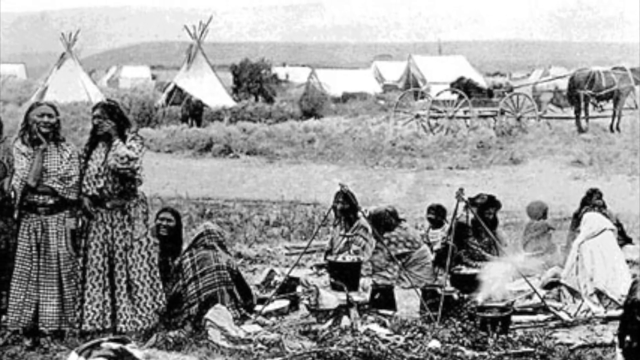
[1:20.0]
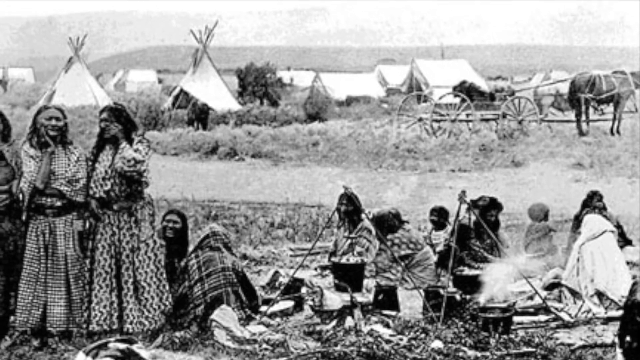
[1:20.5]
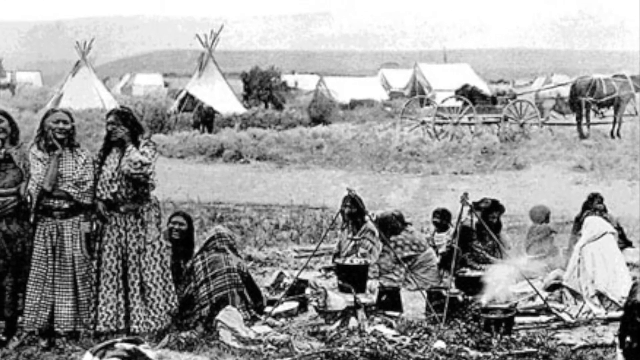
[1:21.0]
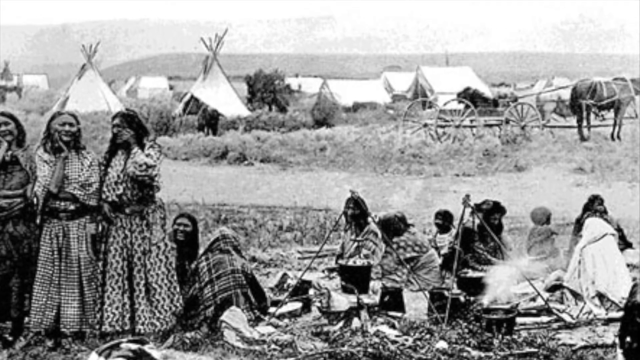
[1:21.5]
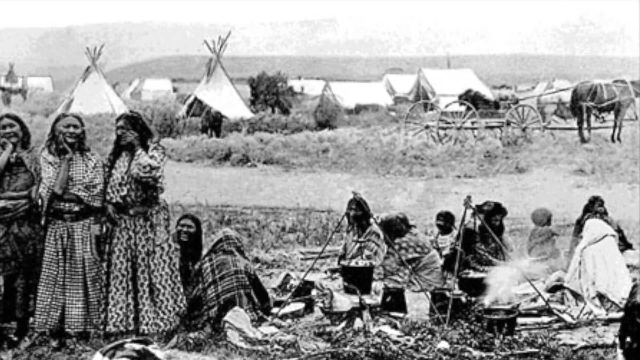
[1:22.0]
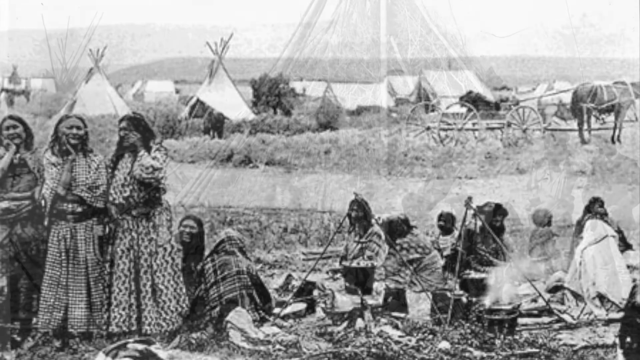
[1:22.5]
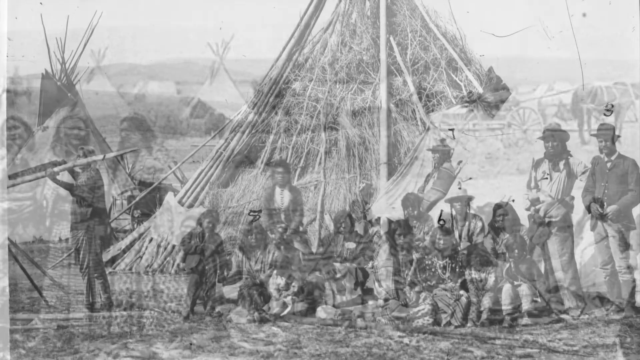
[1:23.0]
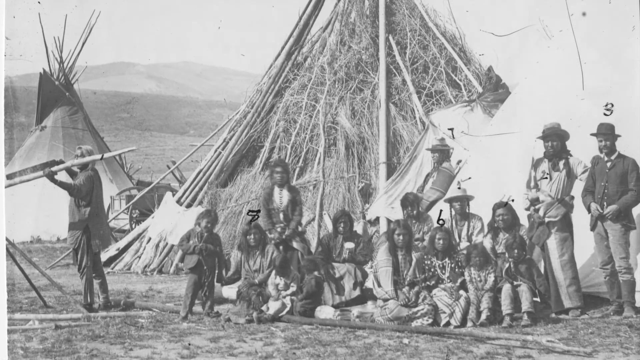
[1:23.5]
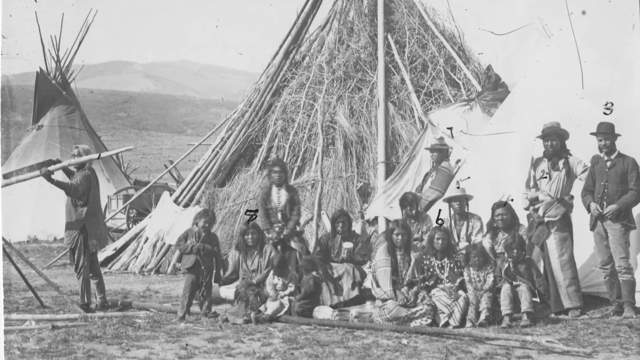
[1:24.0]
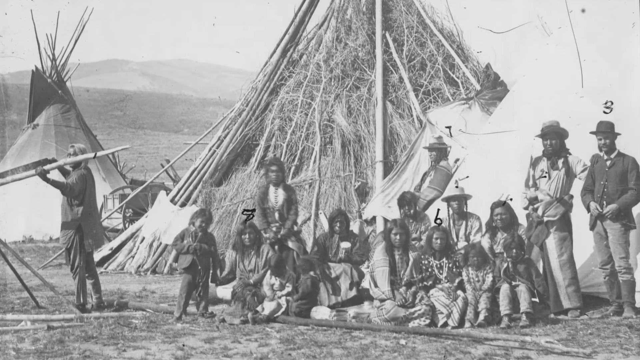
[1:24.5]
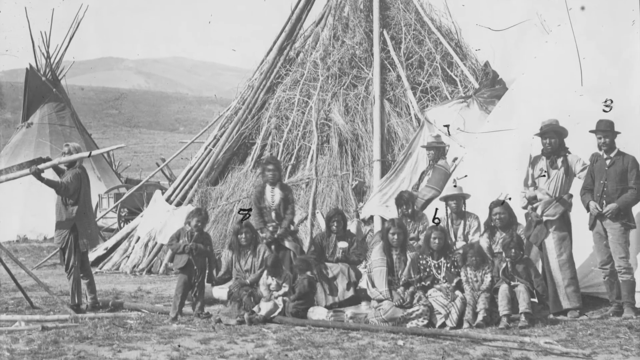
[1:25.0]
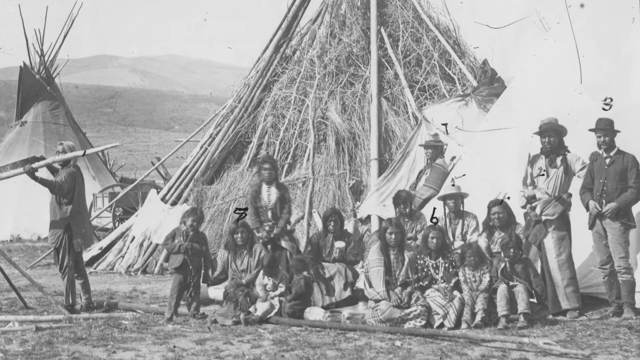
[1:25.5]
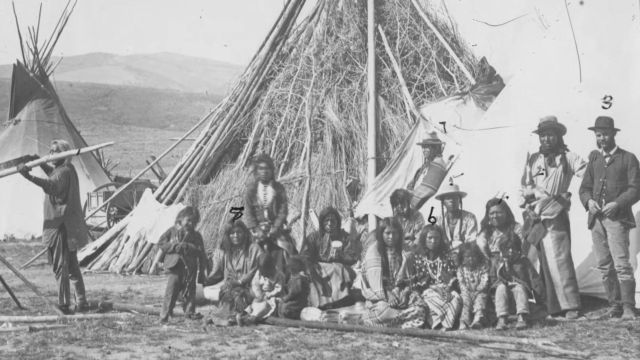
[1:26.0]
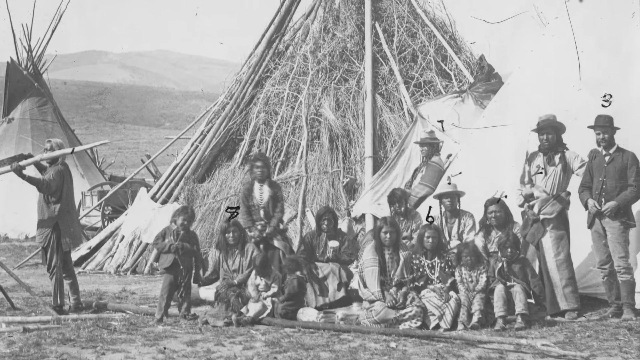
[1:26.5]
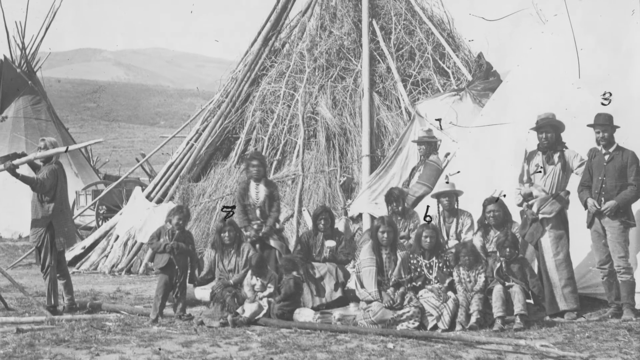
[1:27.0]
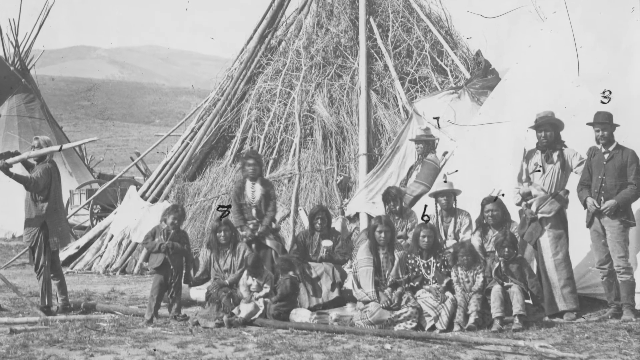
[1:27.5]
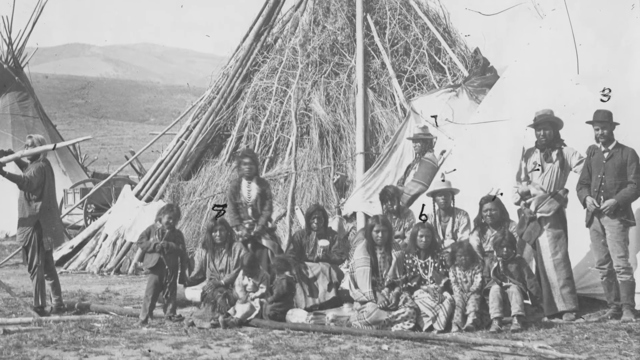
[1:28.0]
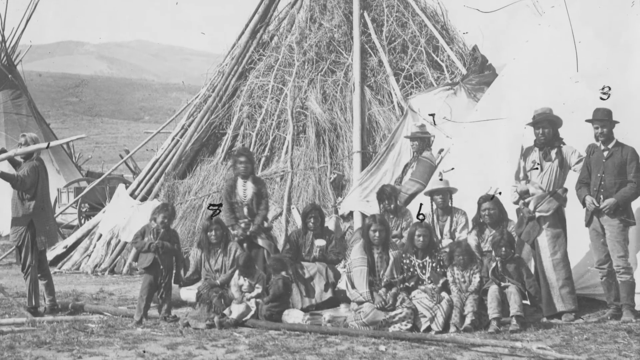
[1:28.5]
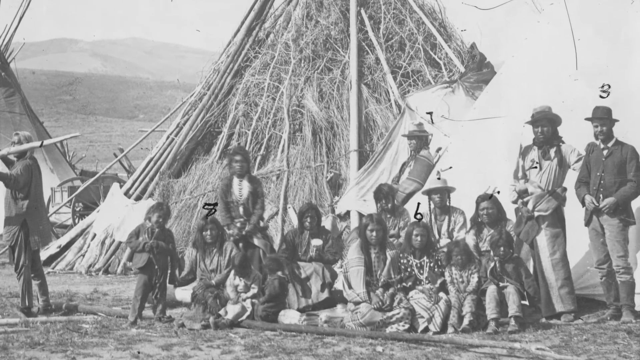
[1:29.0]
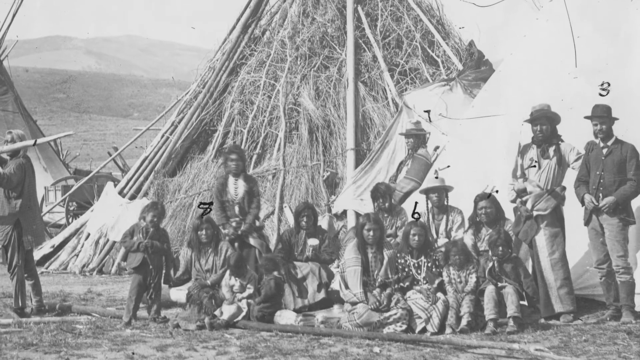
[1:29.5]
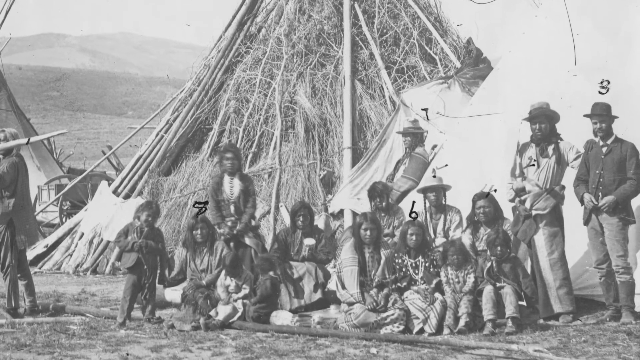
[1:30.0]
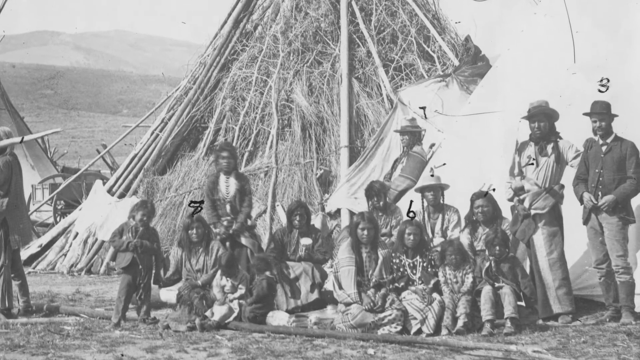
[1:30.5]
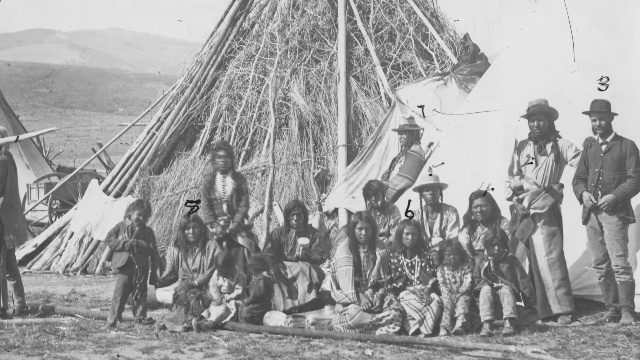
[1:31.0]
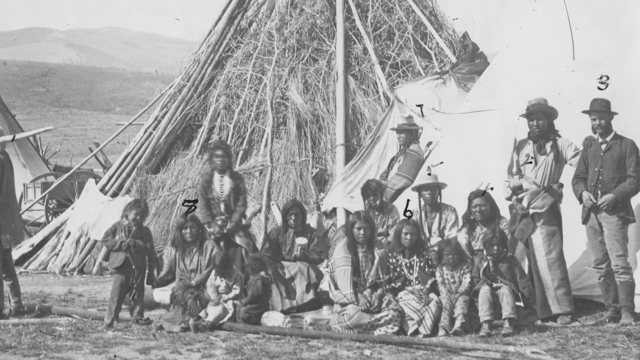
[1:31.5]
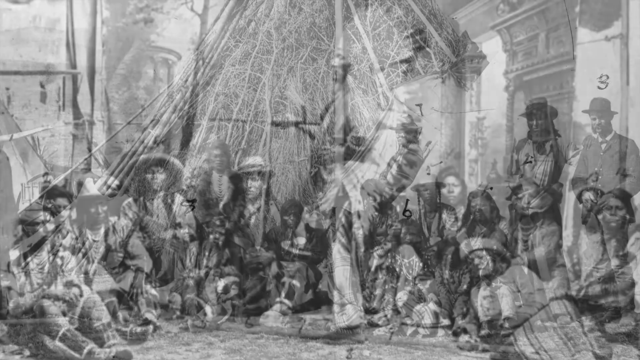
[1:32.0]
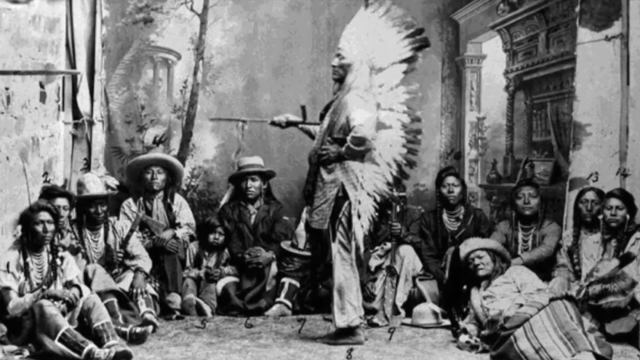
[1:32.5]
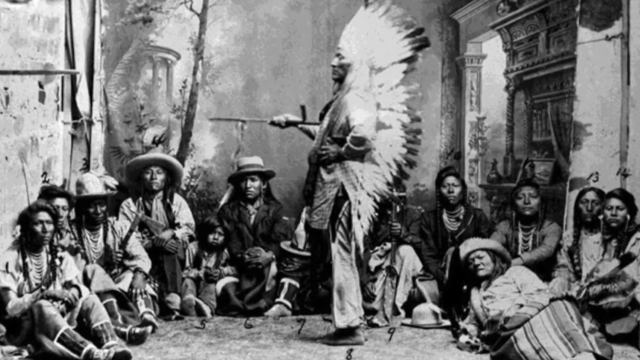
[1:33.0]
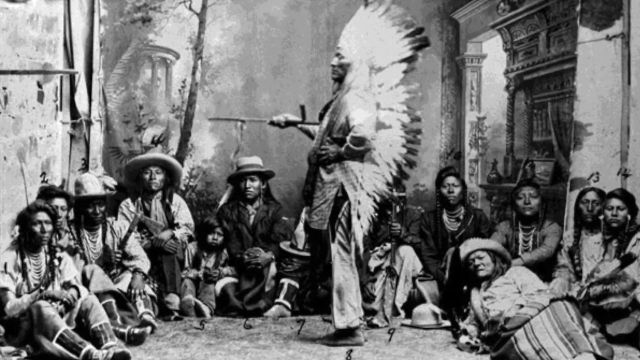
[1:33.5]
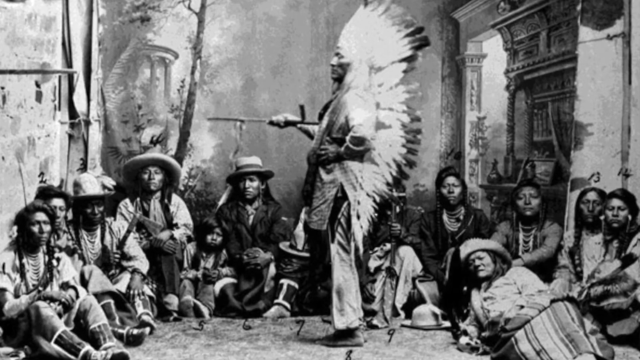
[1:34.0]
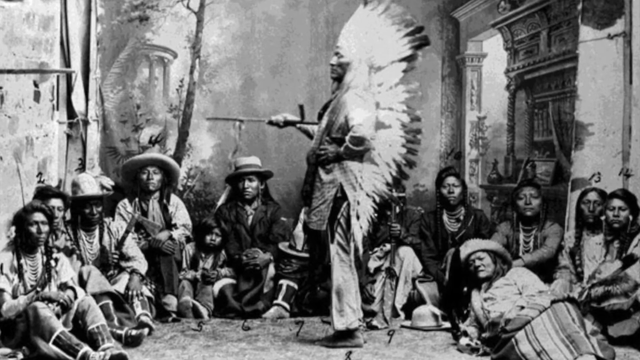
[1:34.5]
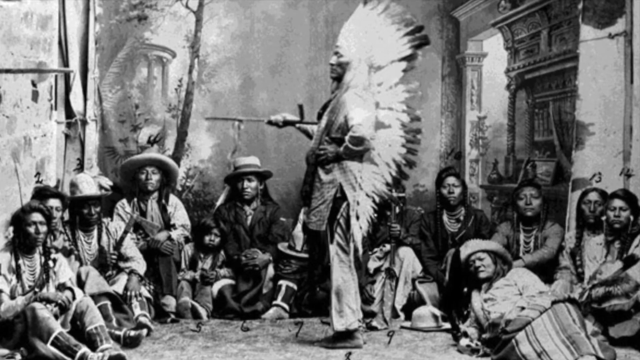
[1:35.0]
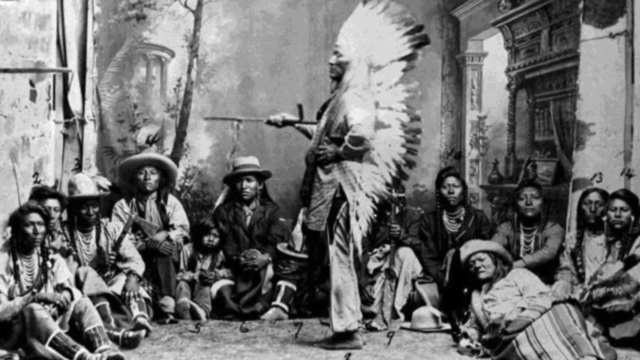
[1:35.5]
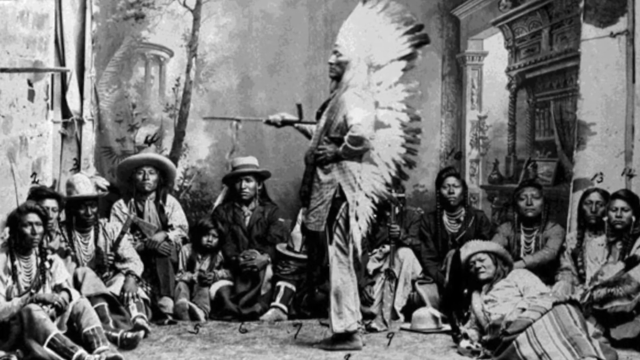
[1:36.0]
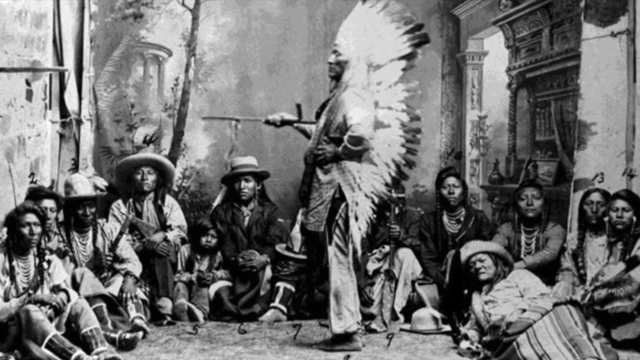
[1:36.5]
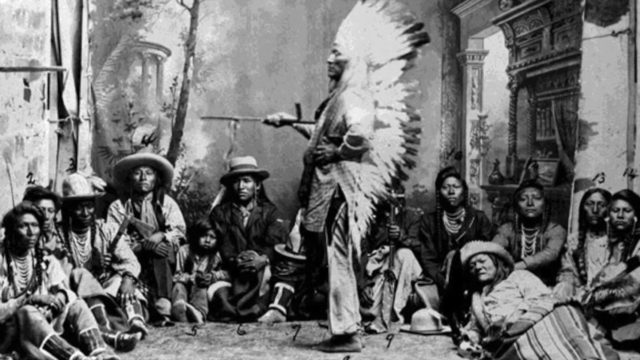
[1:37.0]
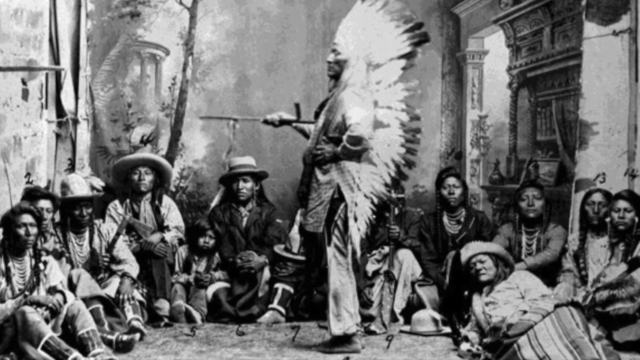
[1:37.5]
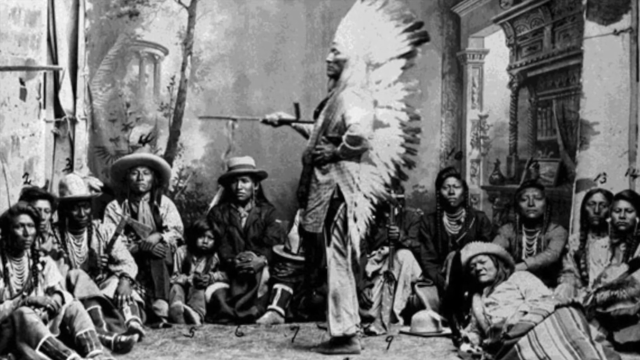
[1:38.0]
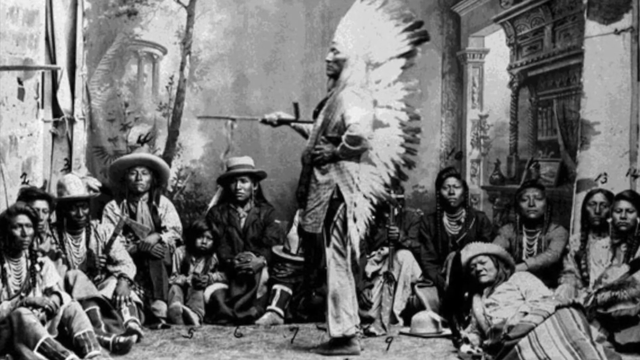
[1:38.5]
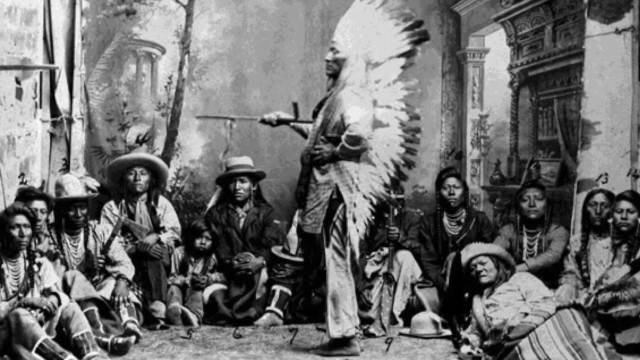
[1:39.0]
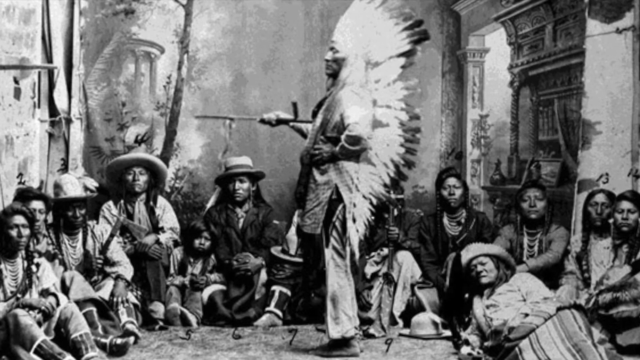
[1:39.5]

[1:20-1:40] Indians are shown on the plains, with tents in the background that look like the type used by the military in the 1800s and possibly the late 1700s. The video transitions to another image showing a group of Indians outside the teepee area they have set up on the plains. The image is marked with several numbers: a number six above one of the Indians, a number three above someone who looks like a white man, and numbers above two of the other Indians. The next image shows an Indian chief standing in a room, apparently holding a peace pipe. He wears a very large and long headdress, and his tribe is seated on the floor all around him. The chief stands to the side in a profile view, showing off the long headdress flowing down the back of his head all the way to his midsection.